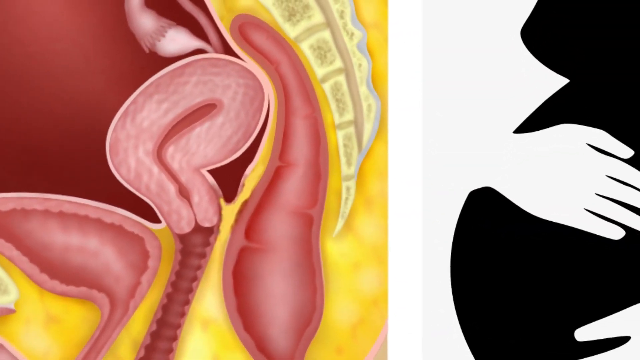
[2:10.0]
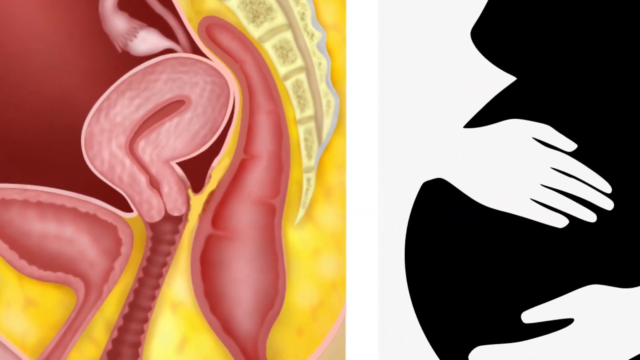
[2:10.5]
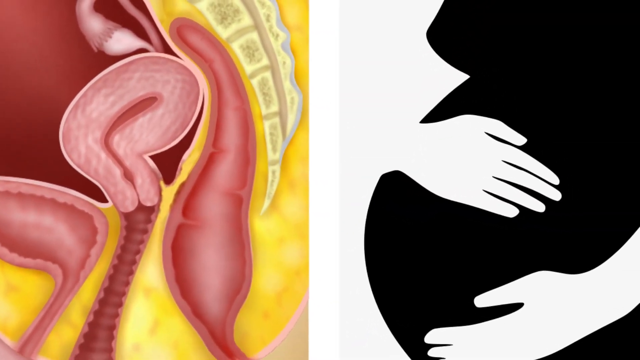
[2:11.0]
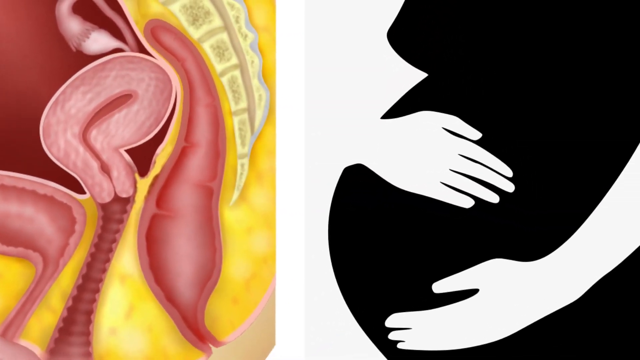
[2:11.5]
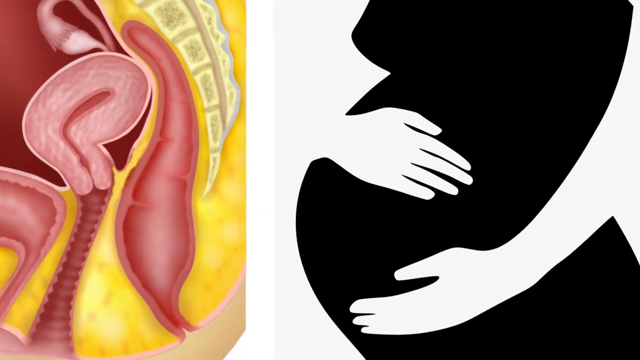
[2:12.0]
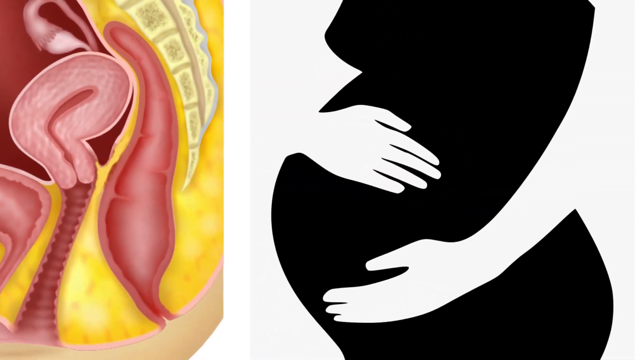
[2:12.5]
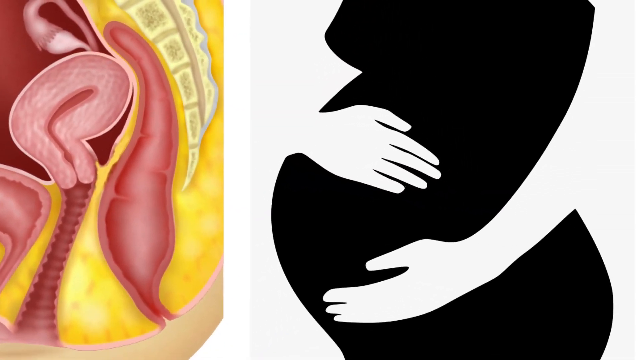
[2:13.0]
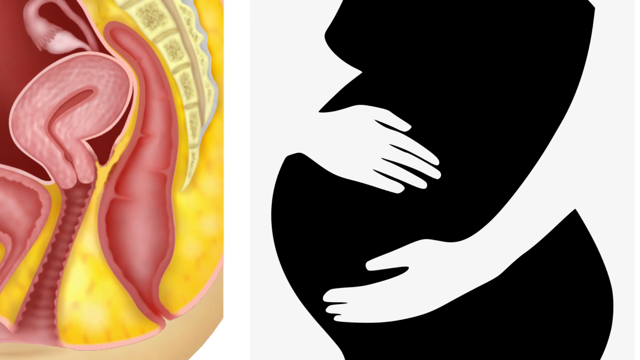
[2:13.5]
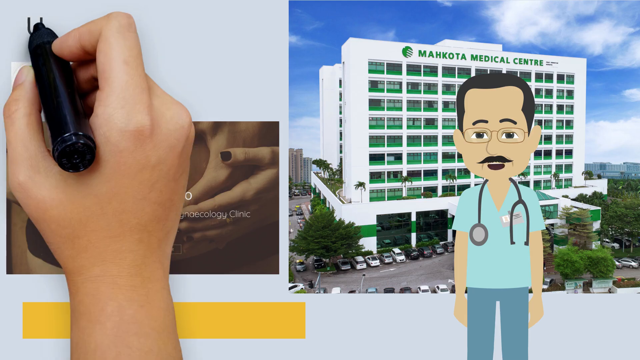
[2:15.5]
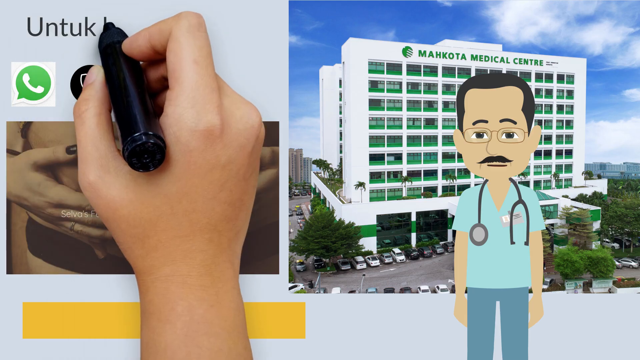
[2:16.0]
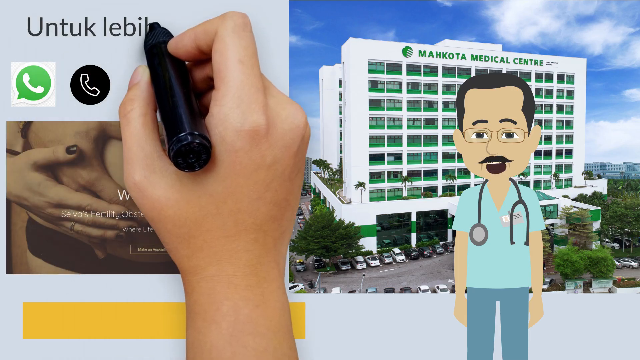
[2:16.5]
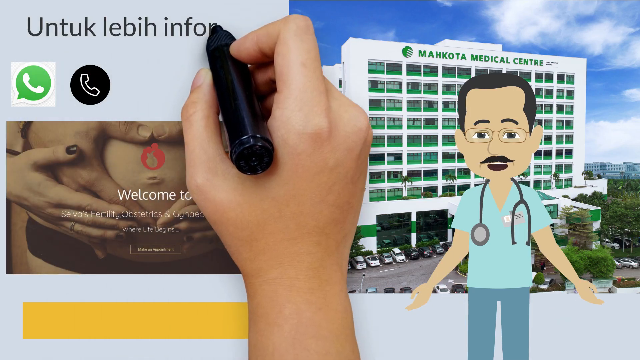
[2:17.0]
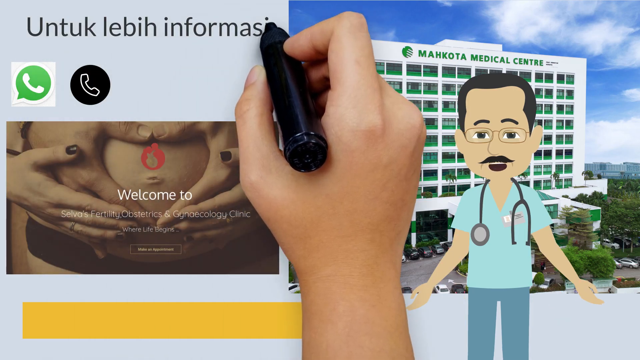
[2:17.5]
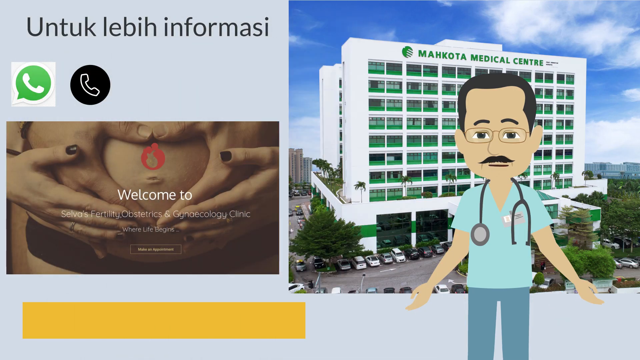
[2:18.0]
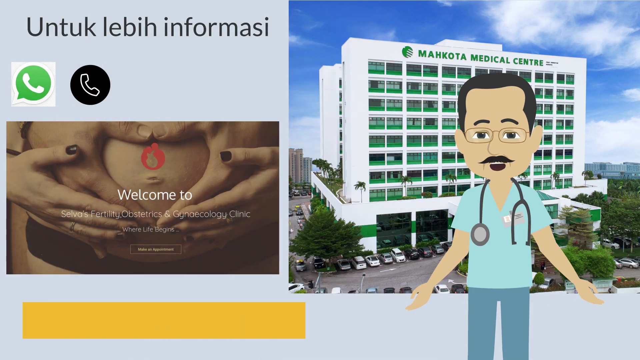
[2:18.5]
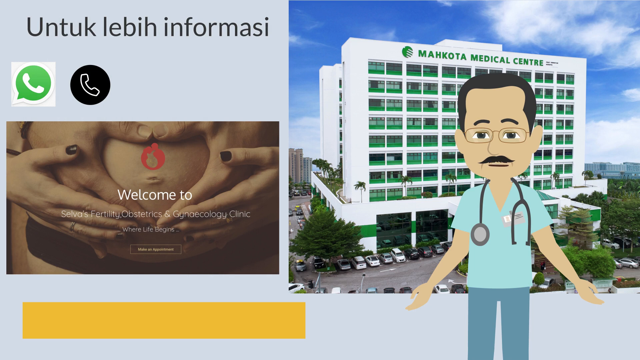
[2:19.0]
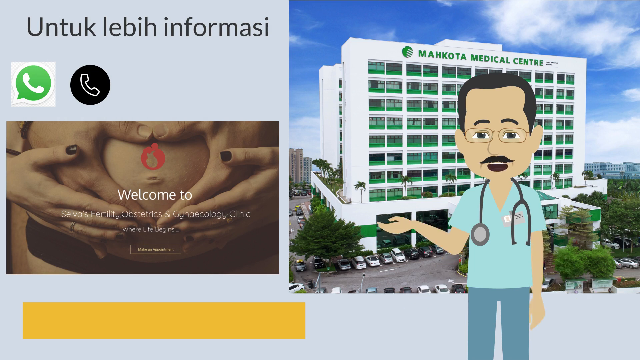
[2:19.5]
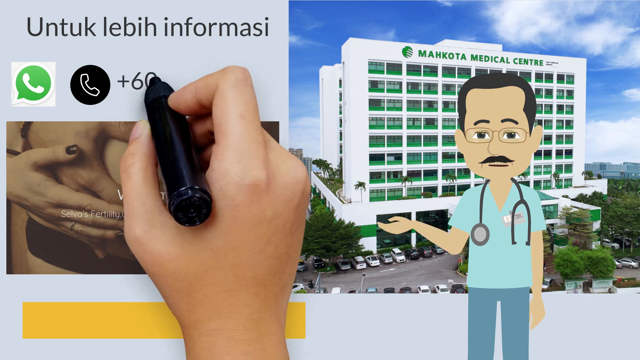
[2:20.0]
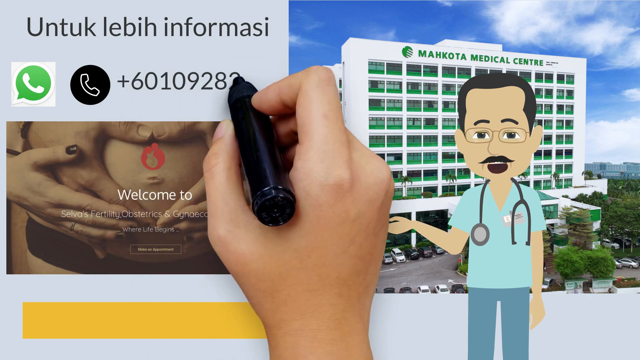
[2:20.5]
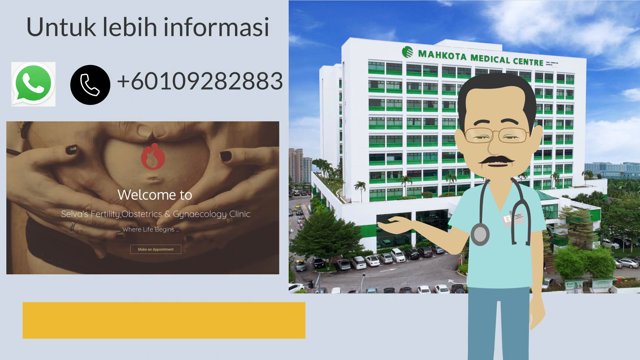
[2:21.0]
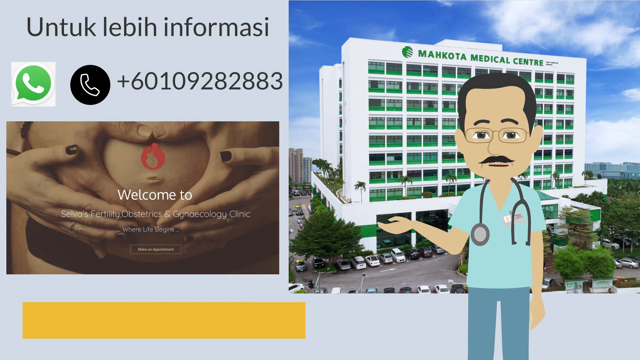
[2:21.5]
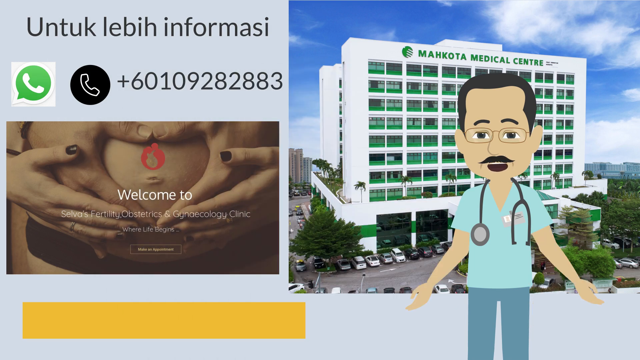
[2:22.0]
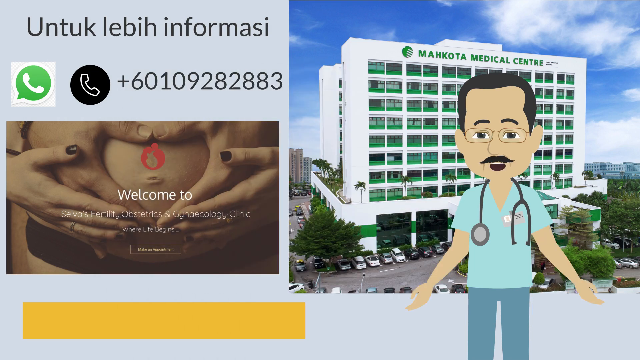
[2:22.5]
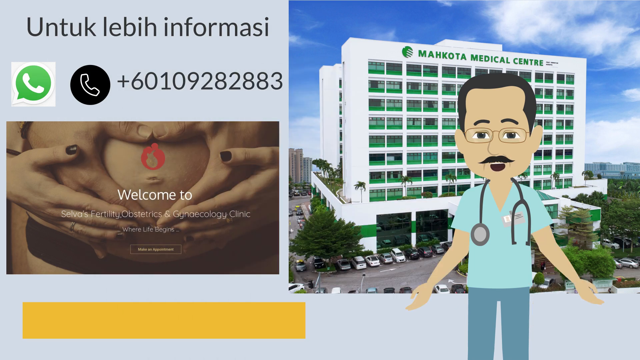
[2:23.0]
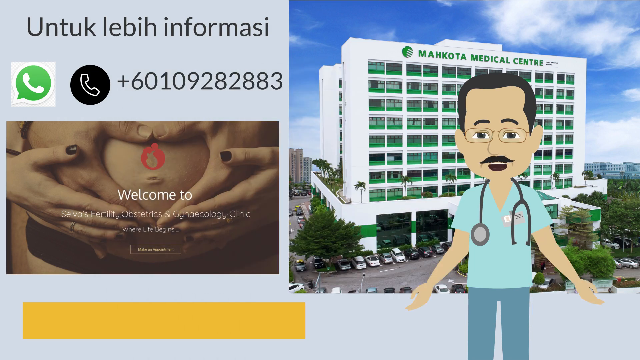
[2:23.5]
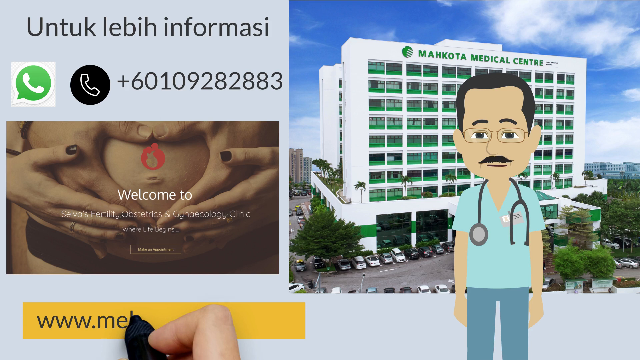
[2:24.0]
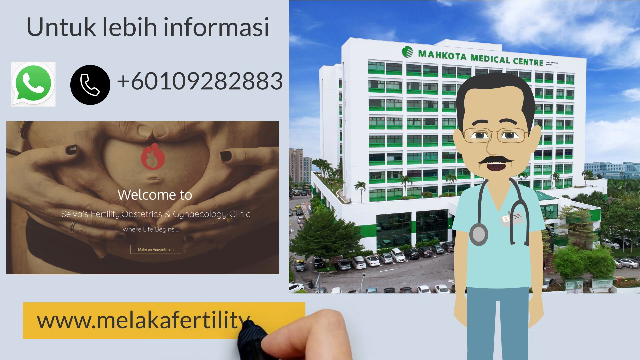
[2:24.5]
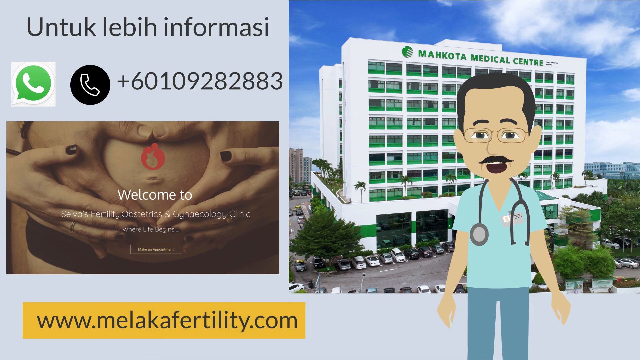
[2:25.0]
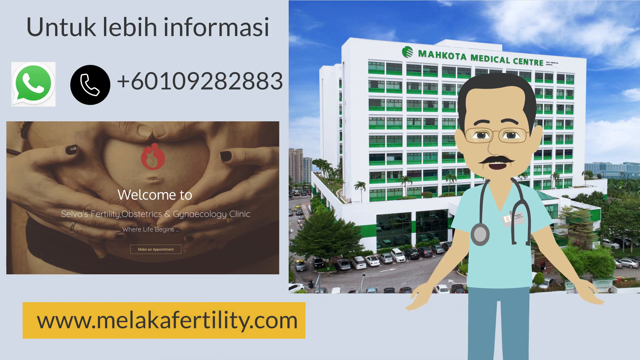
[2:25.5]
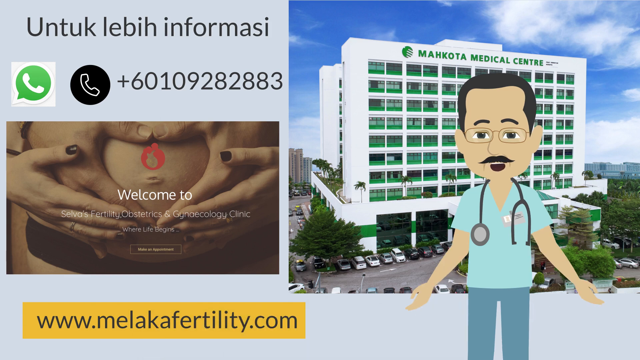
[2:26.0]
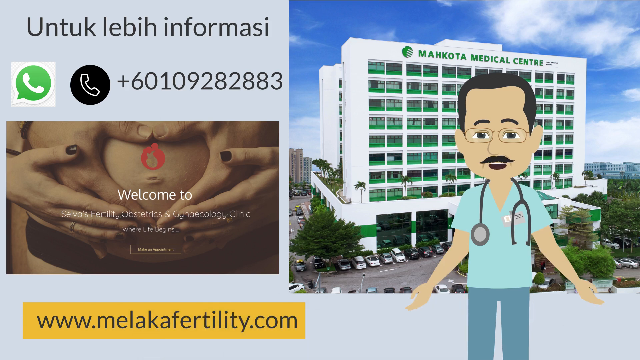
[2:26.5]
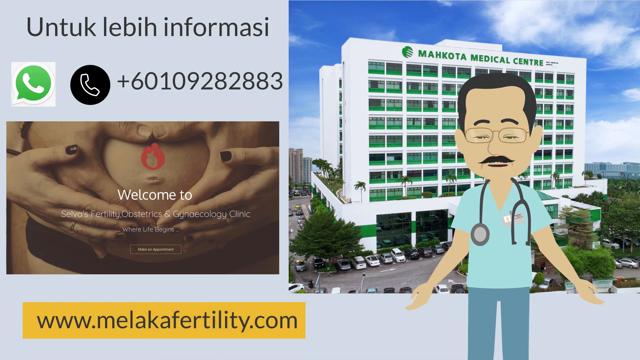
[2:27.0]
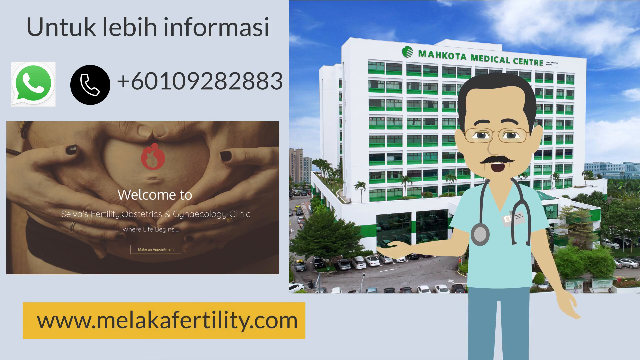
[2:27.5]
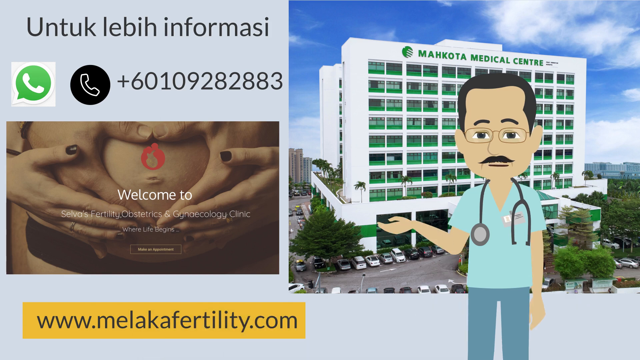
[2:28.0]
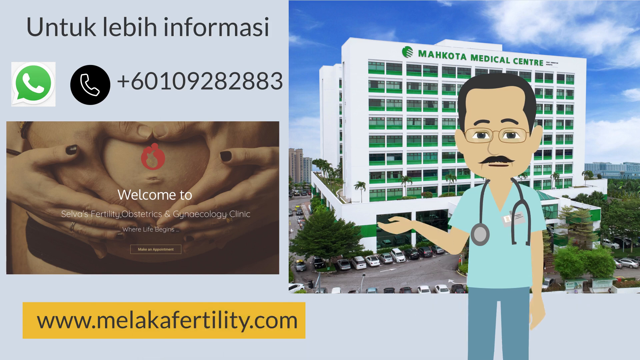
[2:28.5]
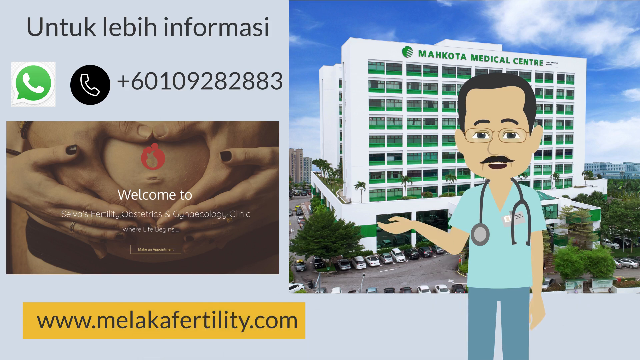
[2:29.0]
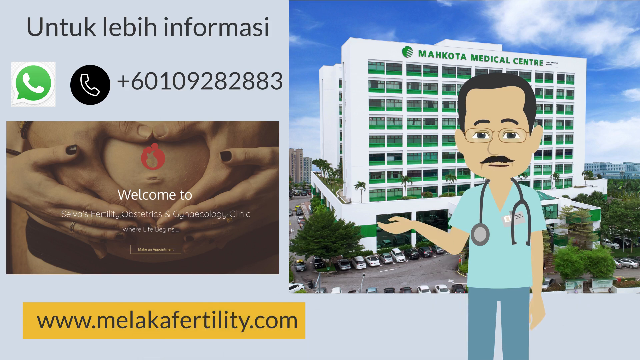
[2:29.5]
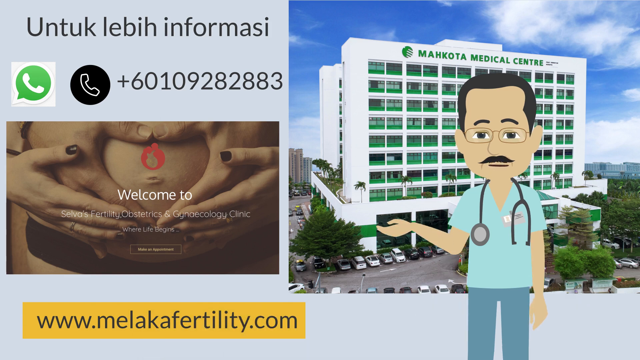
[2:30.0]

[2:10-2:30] The view zooms across a picture of a uterus, with pink, yellow, and white on the left. On the right half of the screen is what looks like a pregnant woman, shown only as a torso, with her hands holding her pregnant belly. On another screen, the doctor stands in front of a building that says "Manicotta Medical Center" in green, with what look like green balconies and a parking lot. He wears blue scrubs, a stethoscope, and glasses, and has brown hair and a mustache. To the left, the hand comes across the screen writing something in the top left, and there is a green phone and a black and white phone. Next, a picture of a belly appears with a man's and a woman's hands around it, forming a circle or a heart, and text says "Welcome to" followed by more words that cannot be read. The doctor speaks, and the hand comes back and writes a phone number. At the bottom, in a yellow box with black writing, is "www.thelacafertility.com".